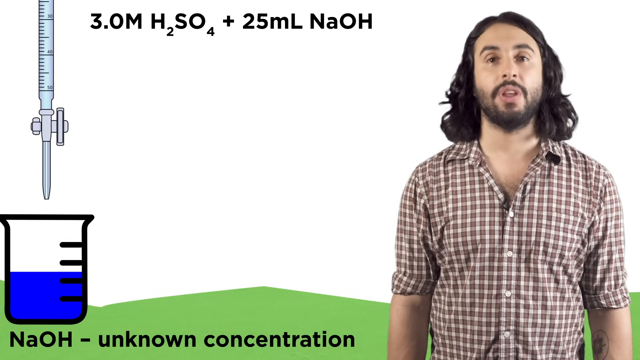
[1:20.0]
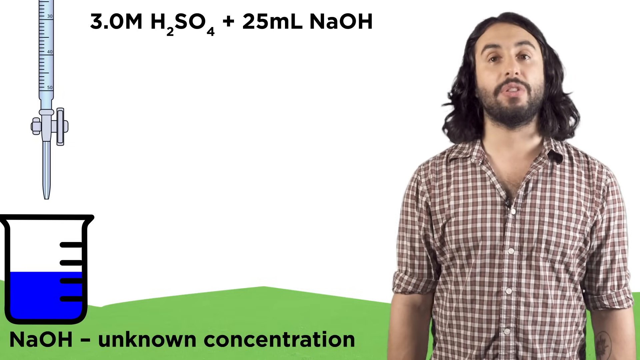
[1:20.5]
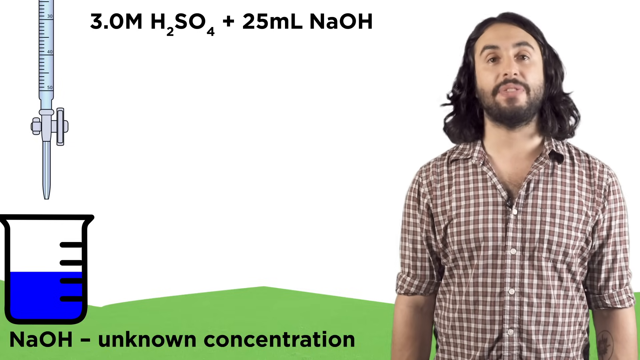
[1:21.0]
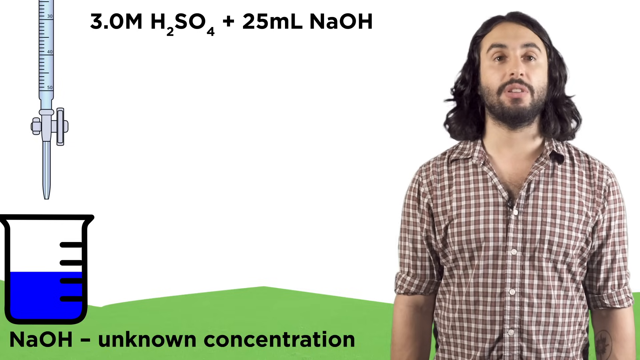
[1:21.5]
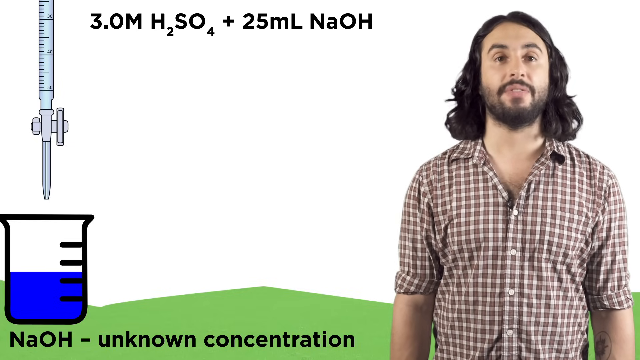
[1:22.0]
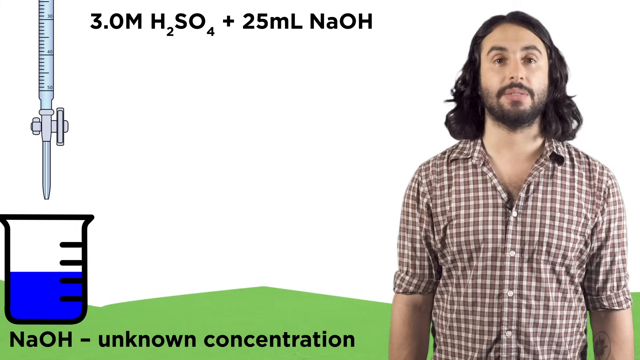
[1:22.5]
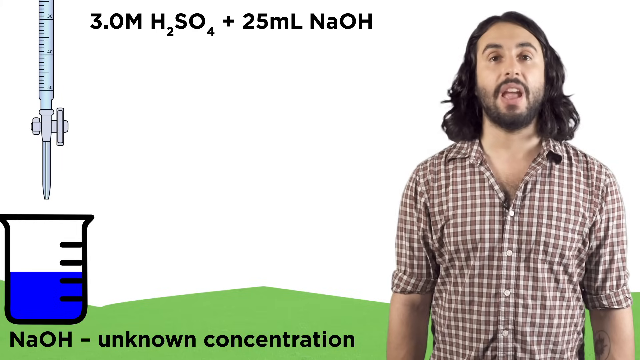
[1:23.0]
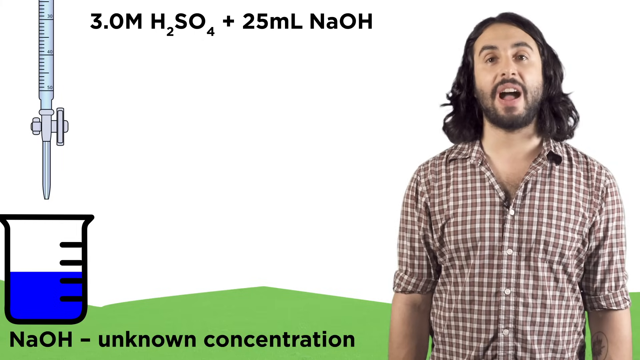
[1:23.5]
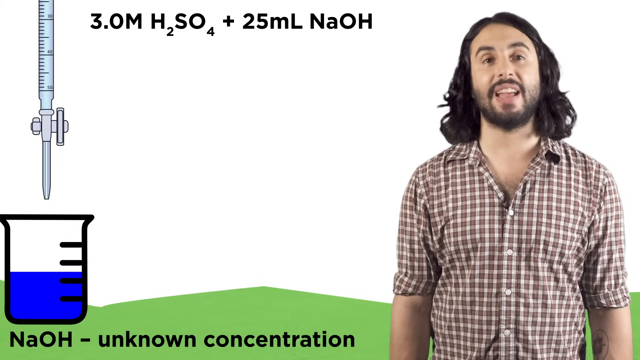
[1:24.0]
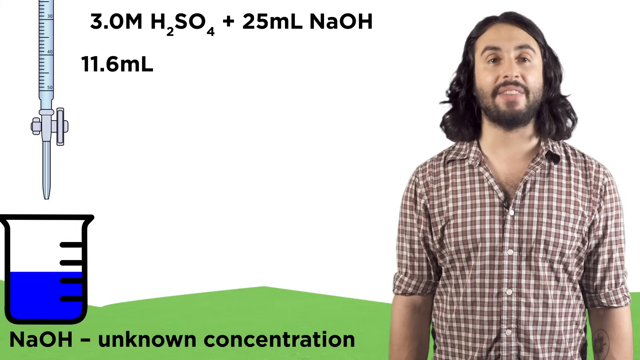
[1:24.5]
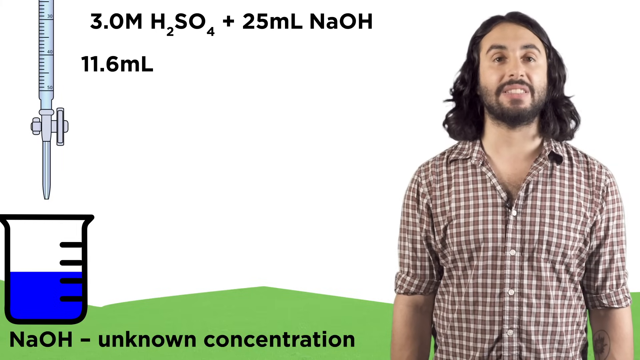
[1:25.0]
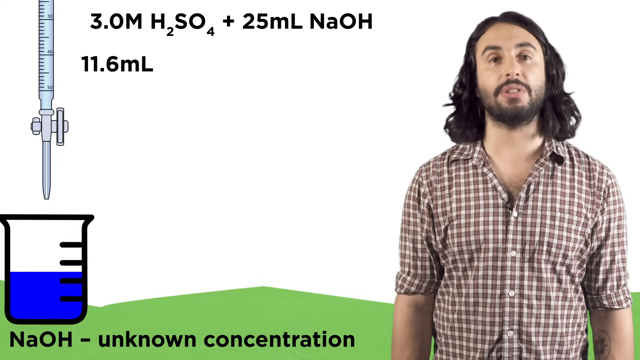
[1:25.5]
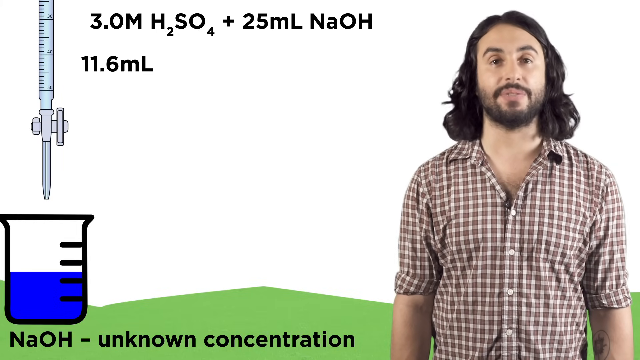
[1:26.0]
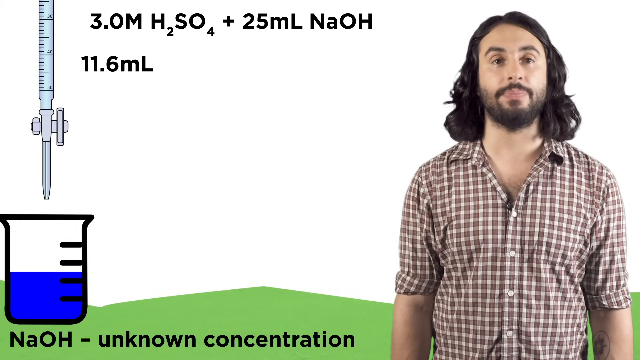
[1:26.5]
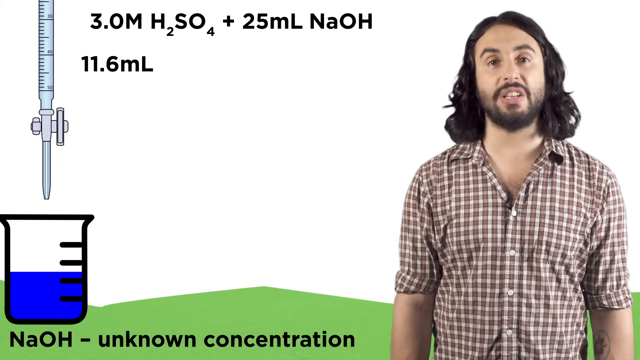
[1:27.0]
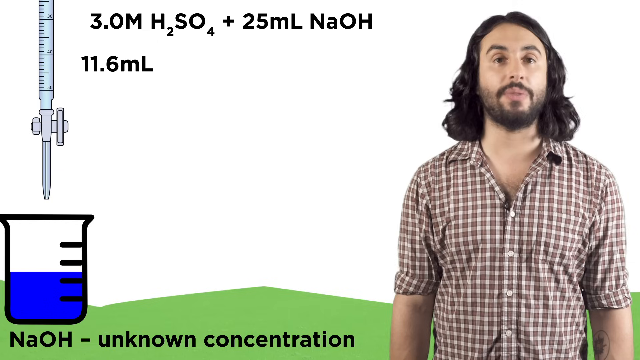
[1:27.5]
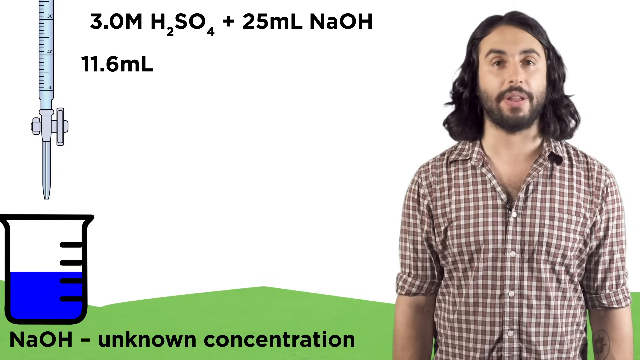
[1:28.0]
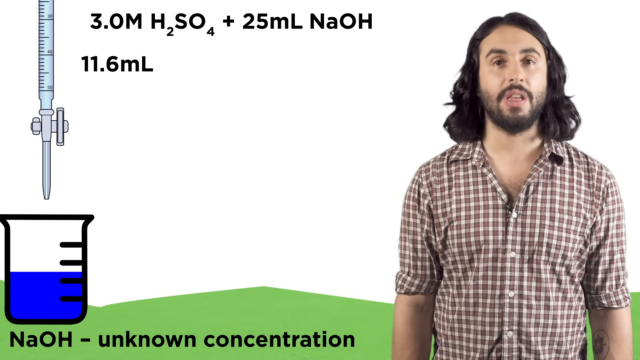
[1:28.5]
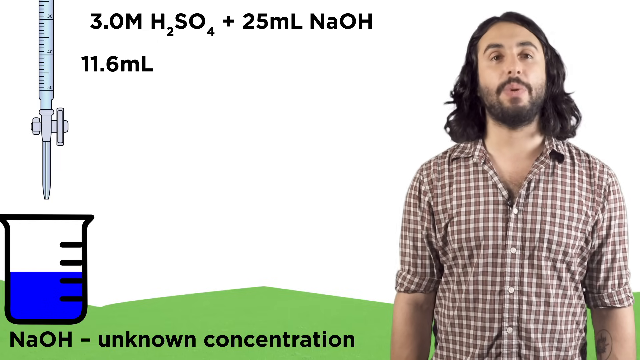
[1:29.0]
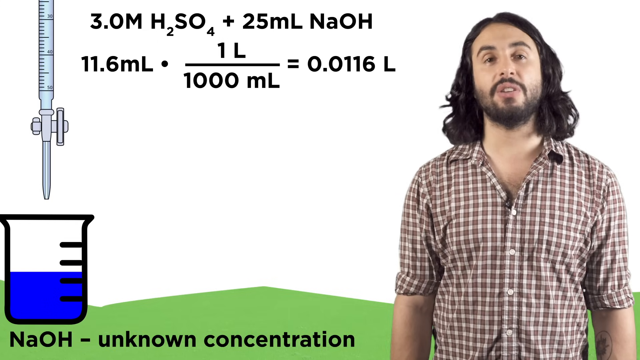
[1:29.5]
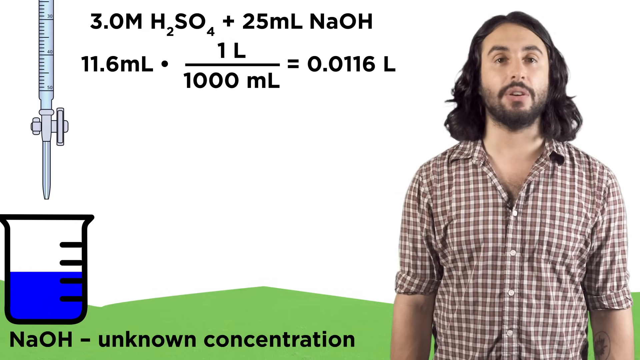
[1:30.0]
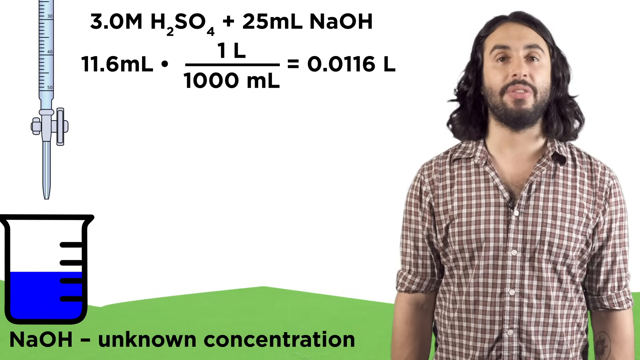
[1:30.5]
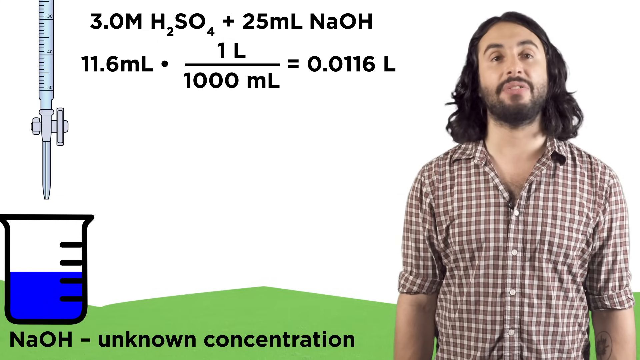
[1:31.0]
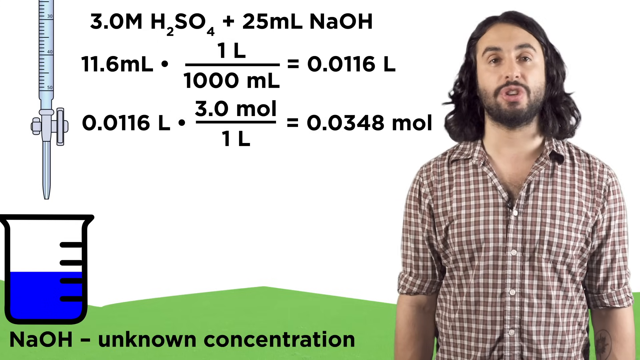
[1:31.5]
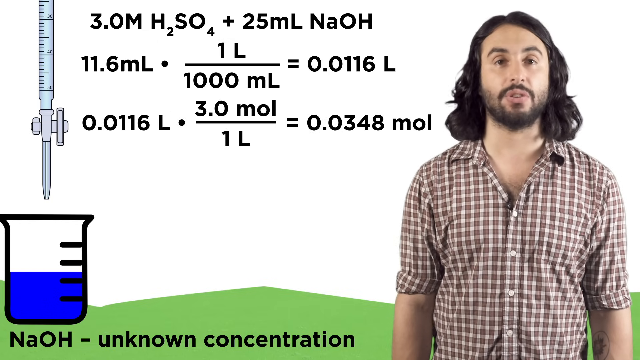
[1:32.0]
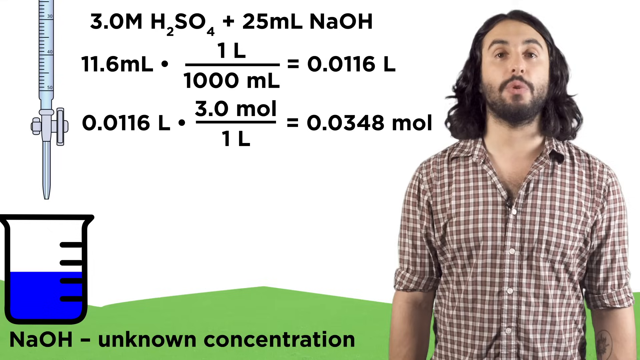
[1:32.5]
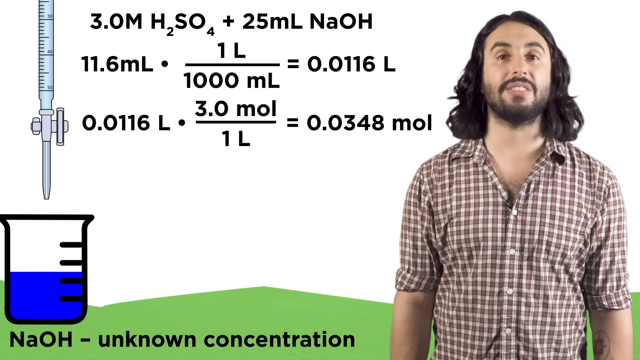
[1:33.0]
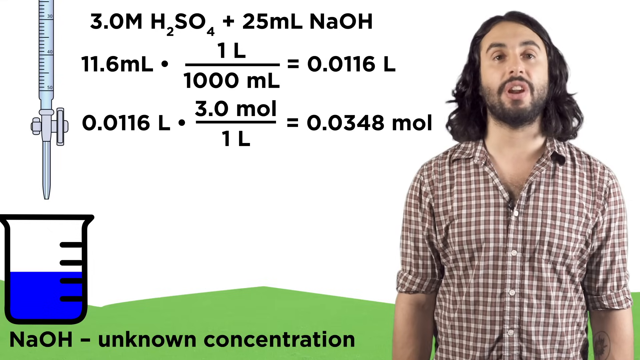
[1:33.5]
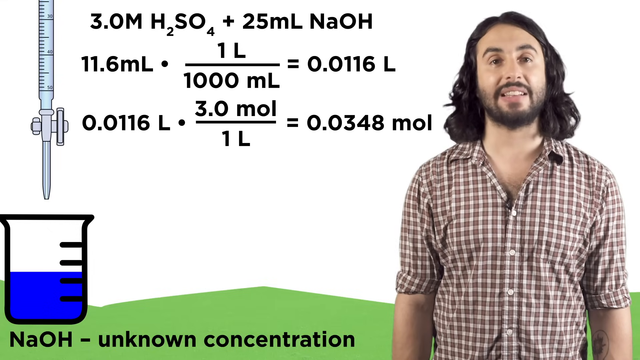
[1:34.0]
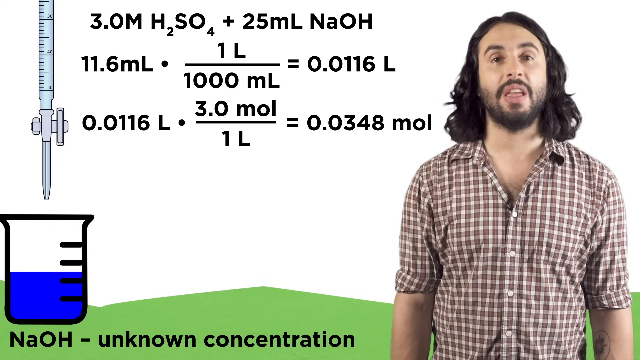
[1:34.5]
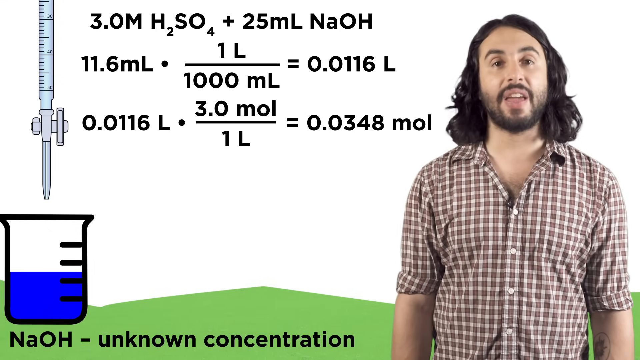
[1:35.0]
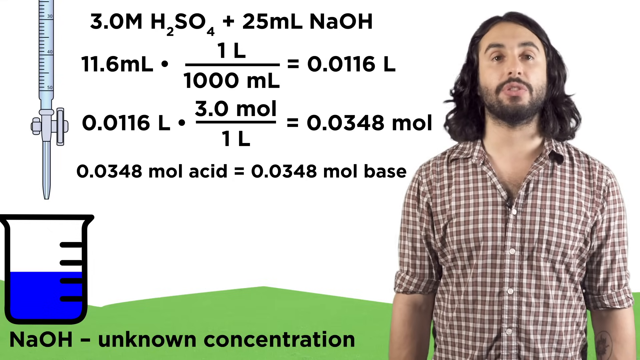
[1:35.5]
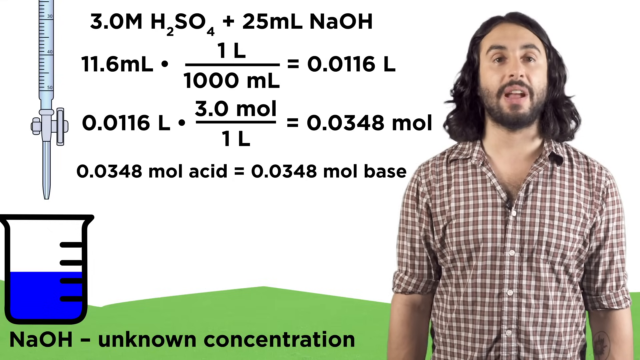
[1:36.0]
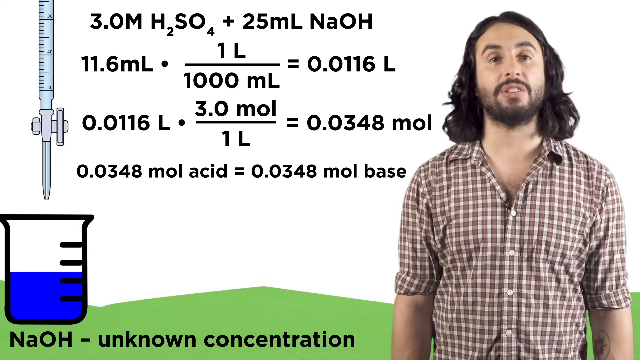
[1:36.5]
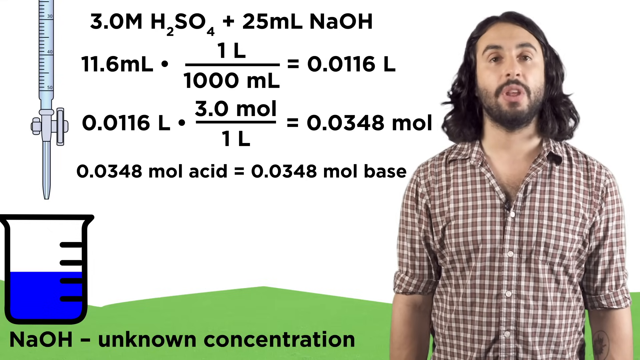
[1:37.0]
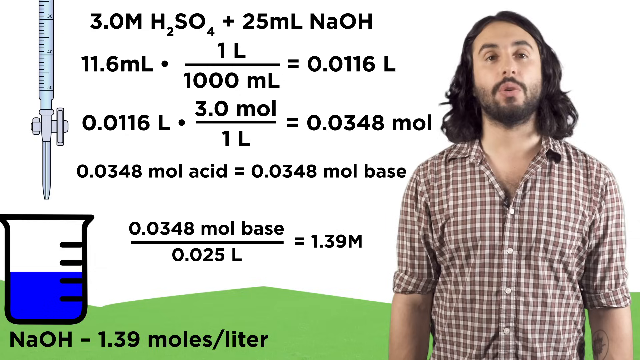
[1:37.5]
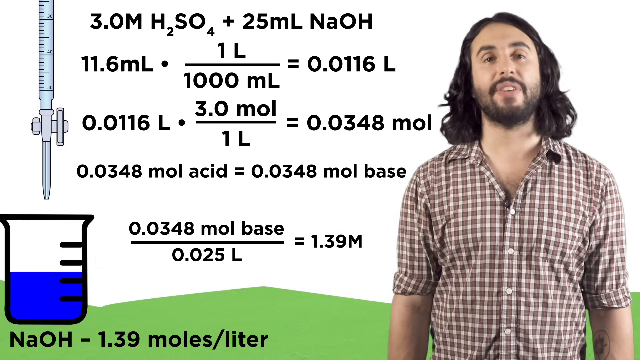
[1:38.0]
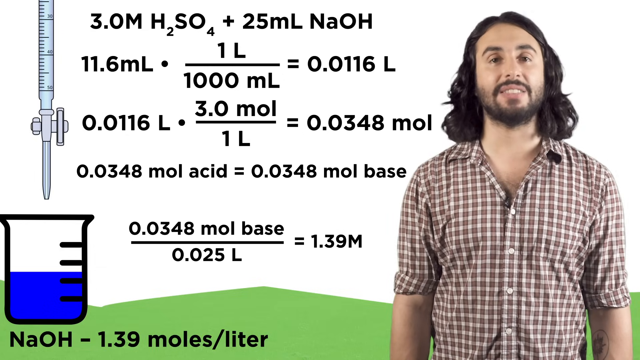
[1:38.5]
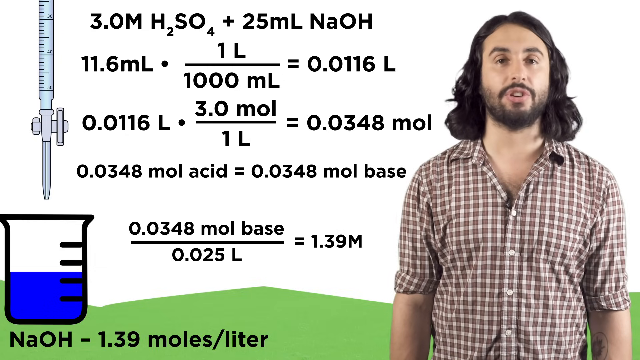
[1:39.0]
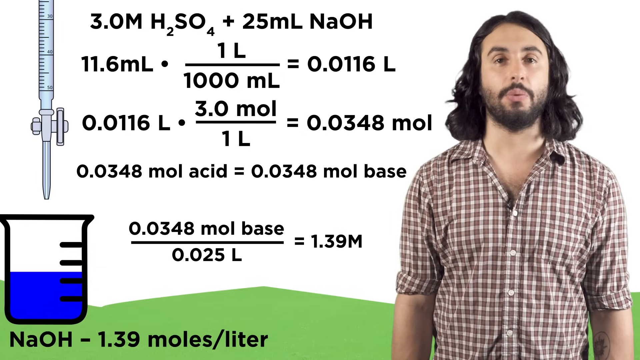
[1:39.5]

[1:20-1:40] The man explains the content on screen, which includes 11.6 milliliters, each step of a calculation, and an illustration. He wears a checked long-sleeved shirt with the sleeves folded, the buttons open, and a mic. He has long hair and a short beard. Examples are shown on the screen, along with a picture of two apparatus on the left. The background behind him is white, and the ground he stands on is green and looks like vegetation. He faces the camera and looks serious. The camera is very close to him.